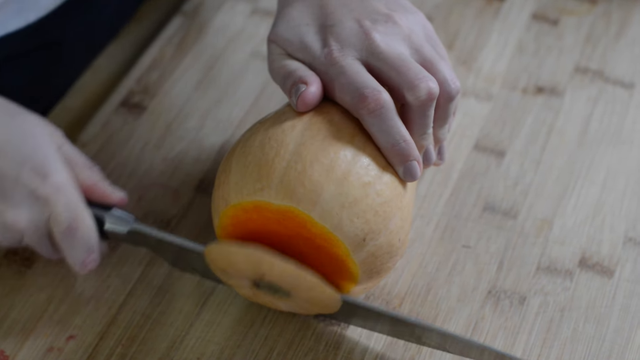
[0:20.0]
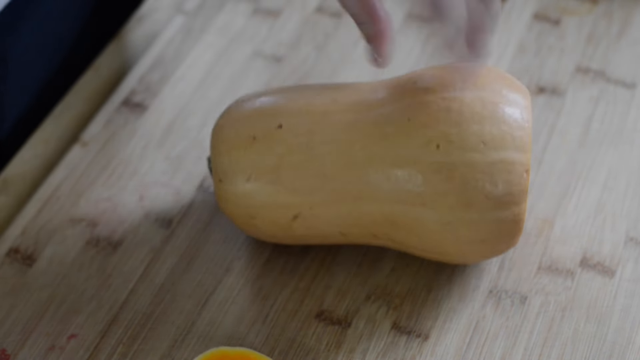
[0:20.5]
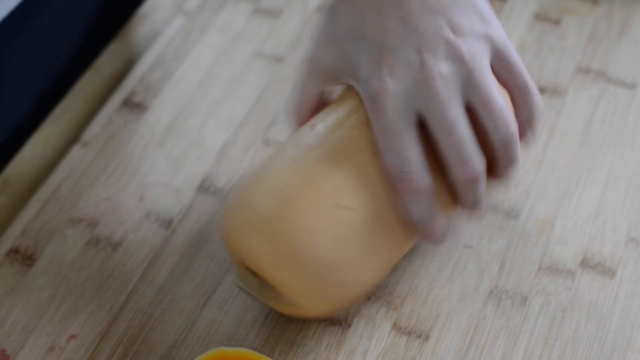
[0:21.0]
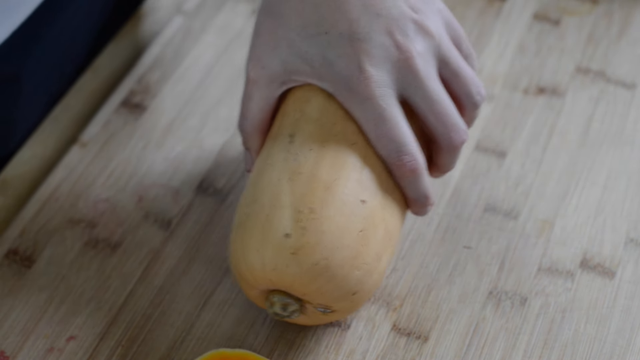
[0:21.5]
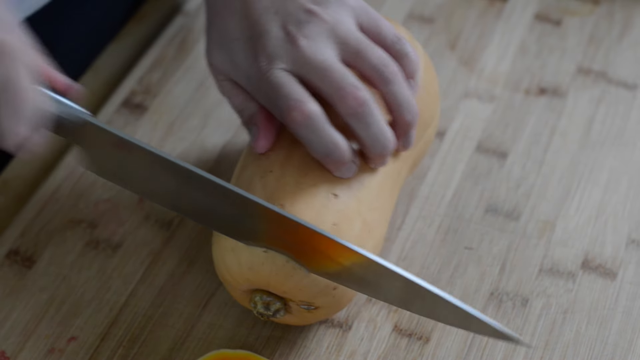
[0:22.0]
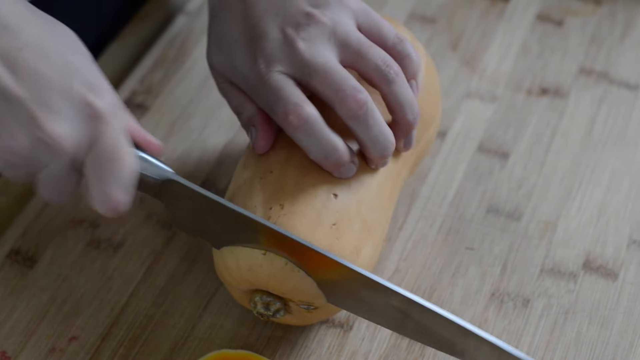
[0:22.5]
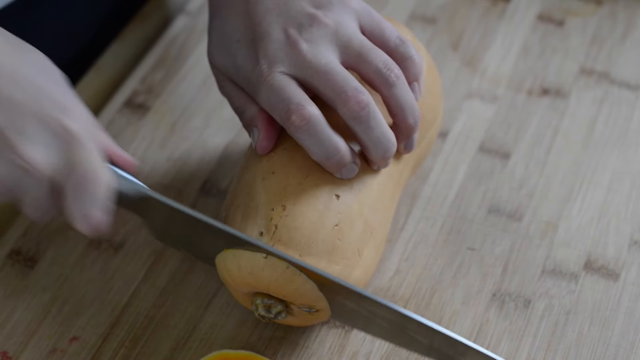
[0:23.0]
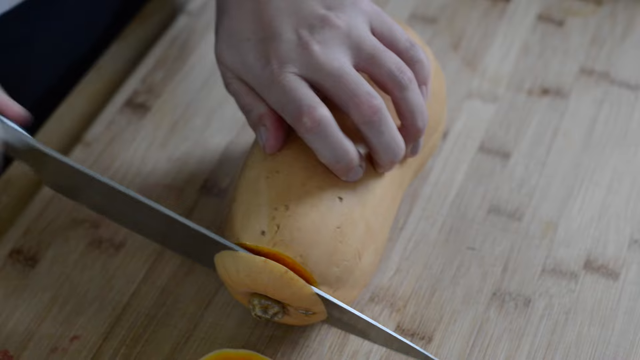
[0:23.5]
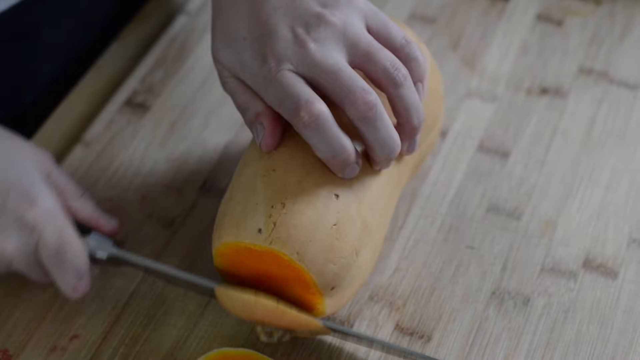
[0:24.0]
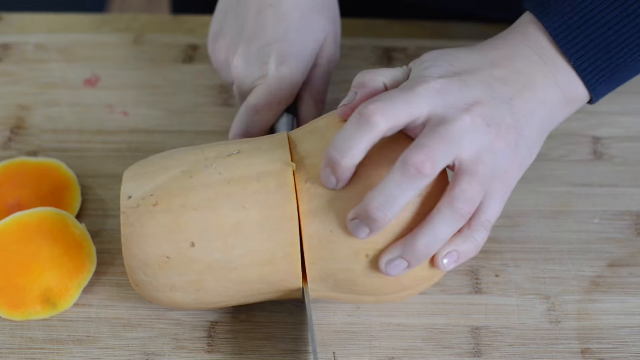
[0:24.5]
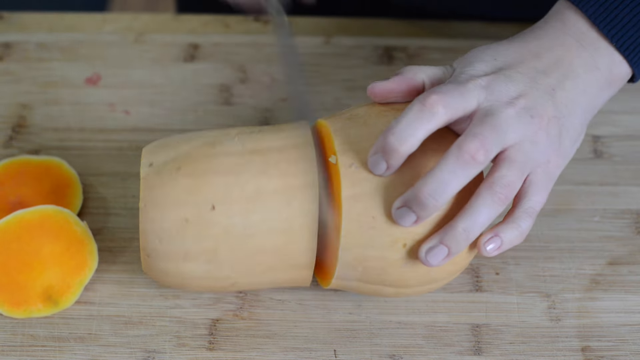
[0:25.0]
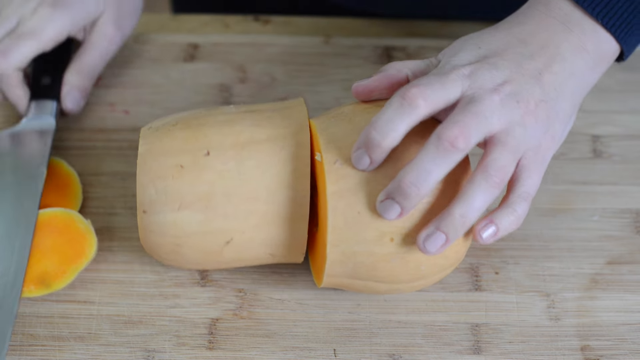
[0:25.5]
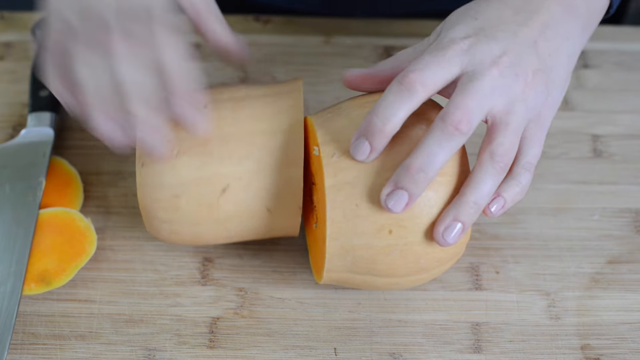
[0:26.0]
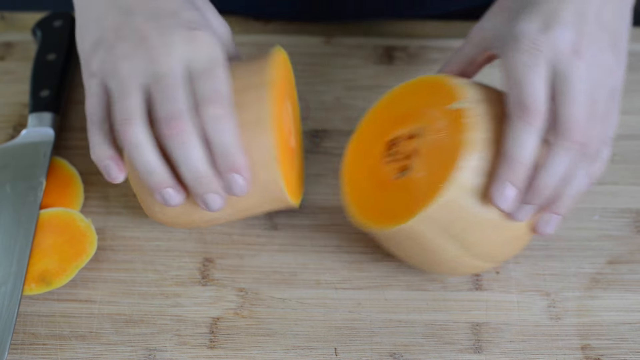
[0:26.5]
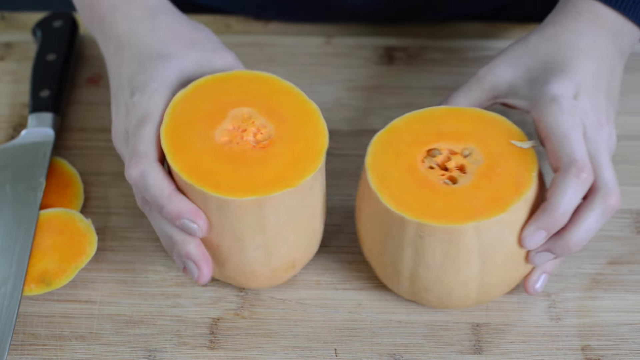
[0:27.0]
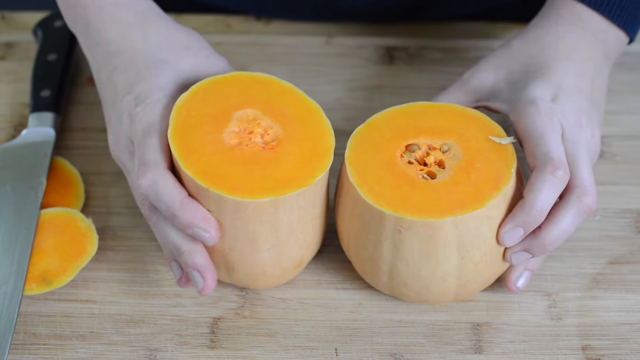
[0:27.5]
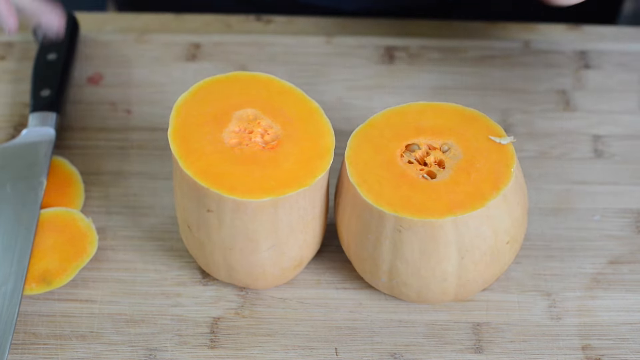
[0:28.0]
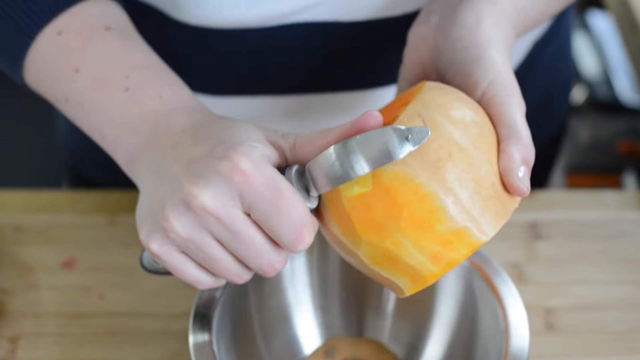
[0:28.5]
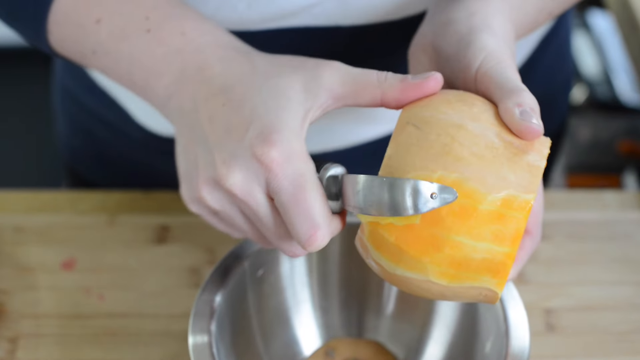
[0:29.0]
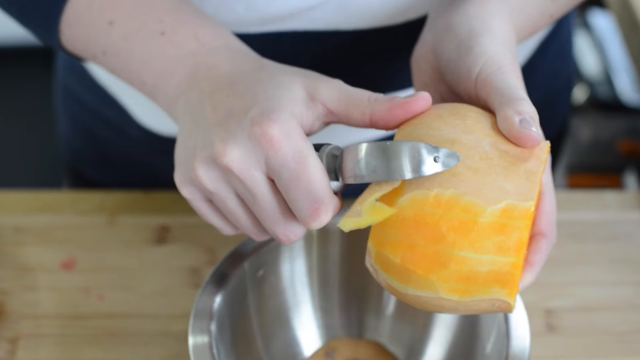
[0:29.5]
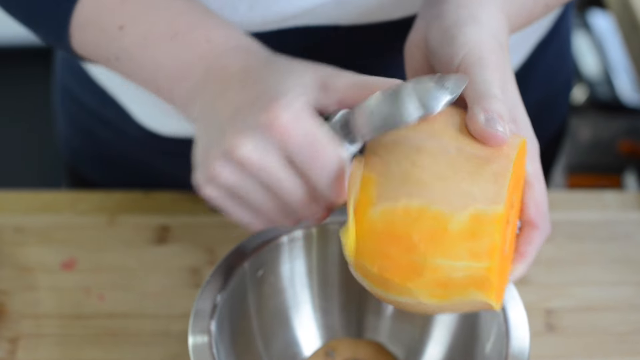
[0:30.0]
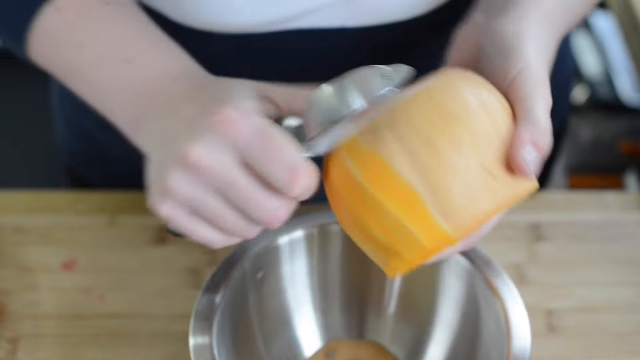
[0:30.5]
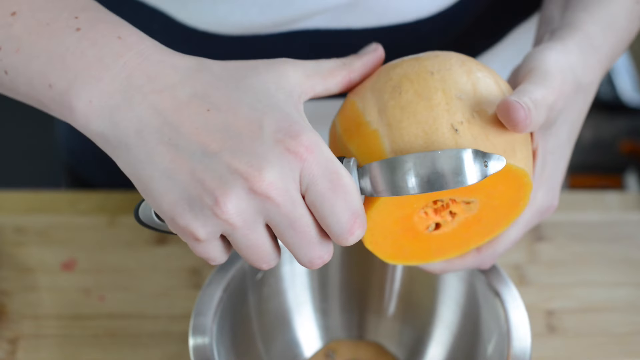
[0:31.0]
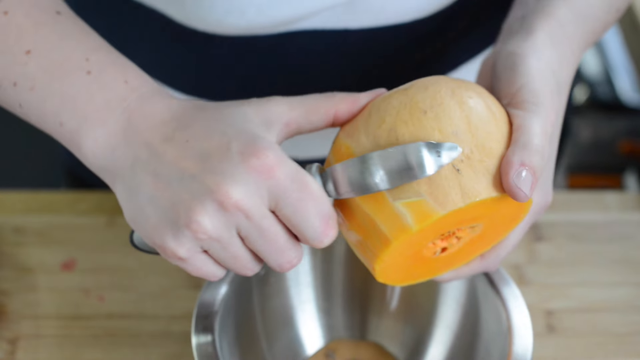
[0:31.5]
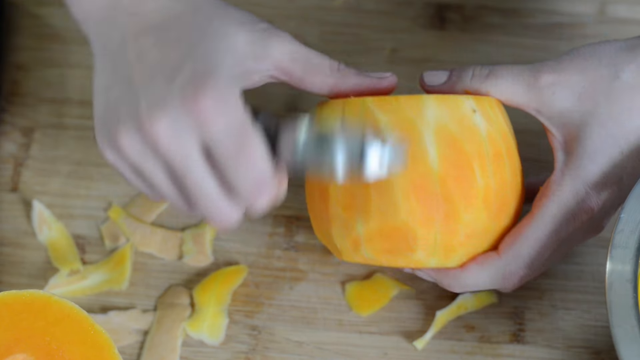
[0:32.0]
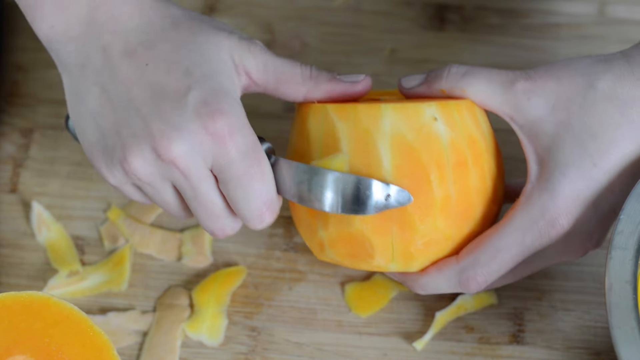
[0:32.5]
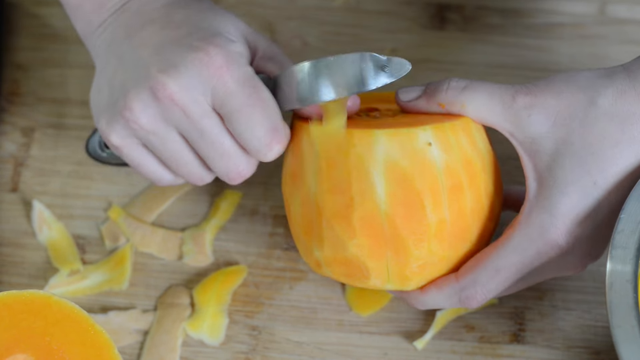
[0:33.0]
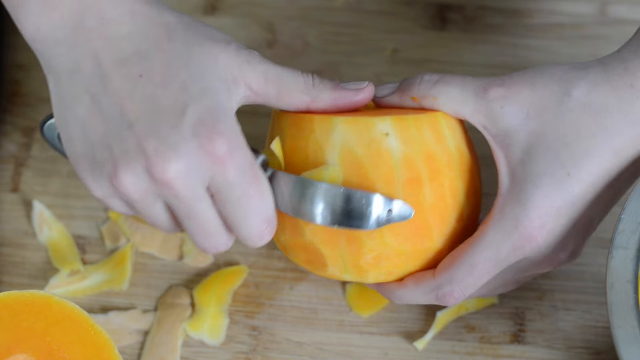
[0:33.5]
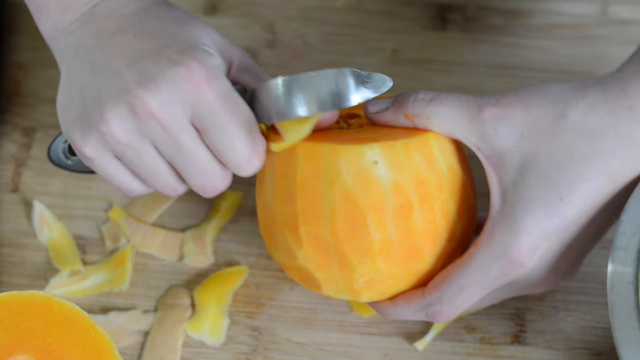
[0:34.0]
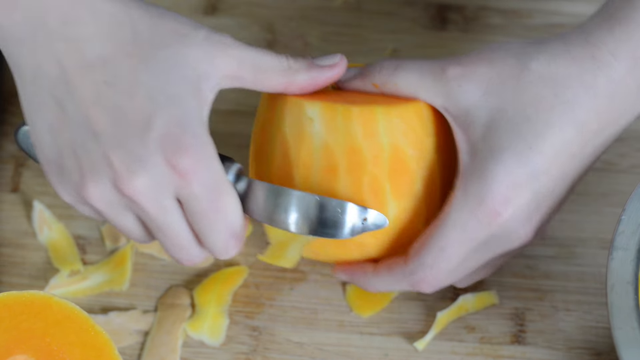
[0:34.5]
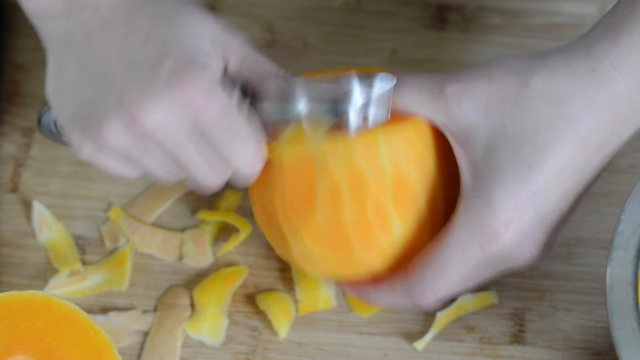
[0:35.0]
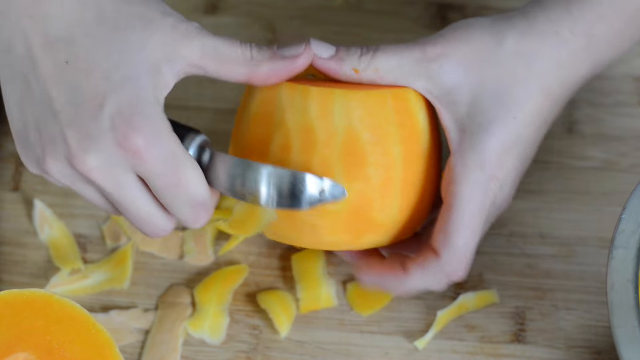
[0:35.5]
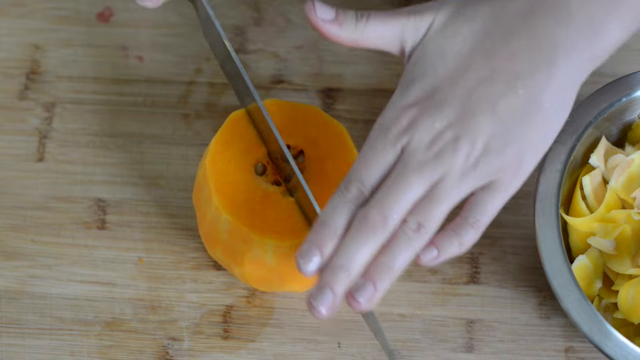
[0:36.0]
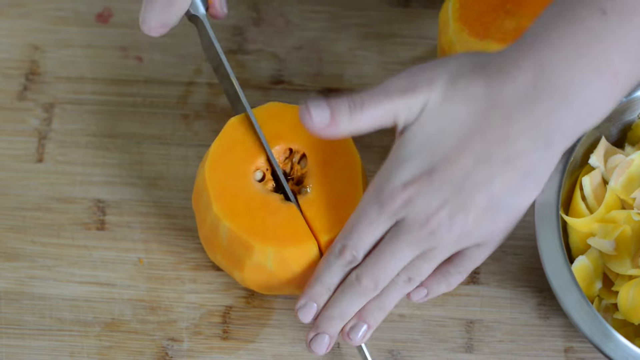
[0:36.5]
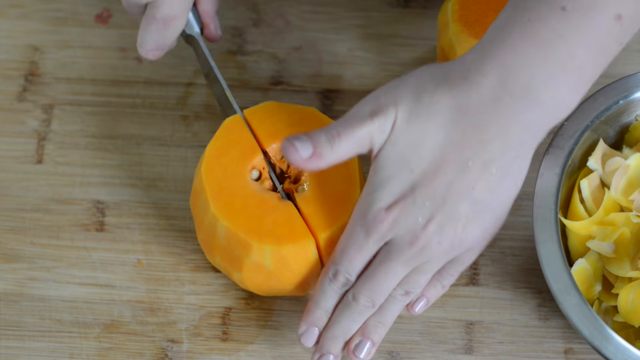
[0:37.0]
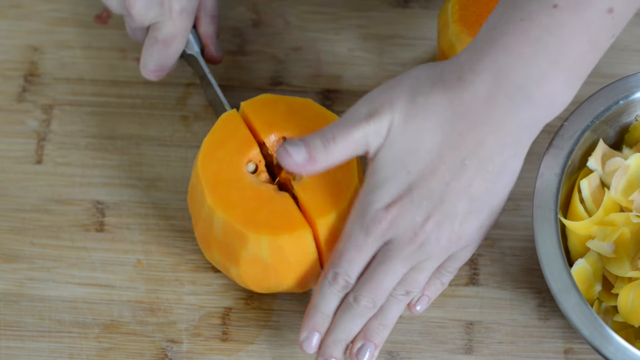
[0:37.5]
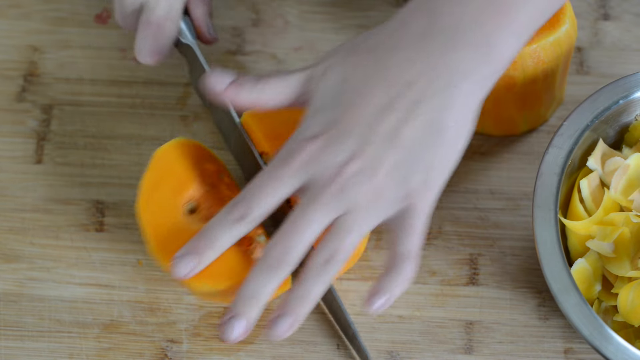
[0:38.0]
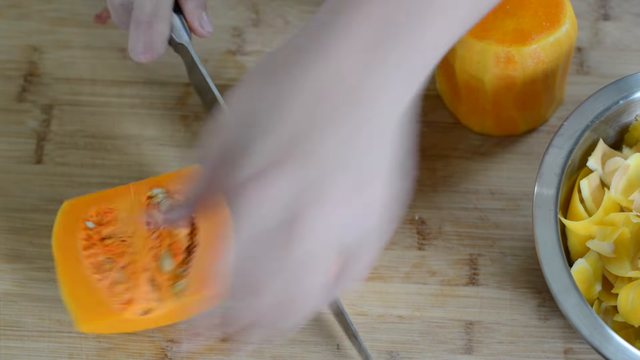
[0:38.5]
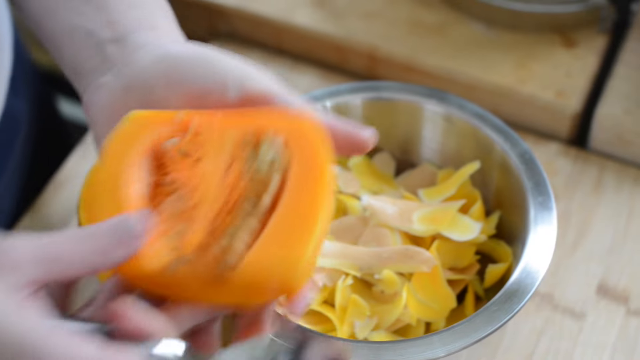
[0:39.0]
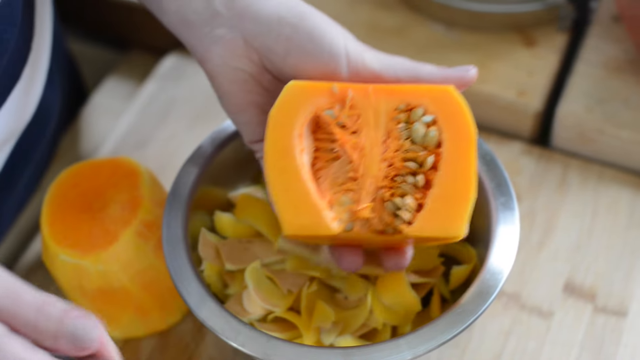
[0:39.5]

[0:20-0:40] A squash is rotated on a cutting board while a person cuts it in half with a very large knife. They then peel the squash, apparently with a vegetable peeler, into a silver bowl, and then peel it over the cutting board. They cut it in half again and get ready to scrape the seeds out into a silver bowl, using a silver spoon to scoop out the seeds. The squash is spun around, cut and peeled from various angles over and over in fast, quick cuts. In one shot the person wears what looks like a navy and white shirt, and in another they hold a piece of the squash in one hand while cutting it with the other. It looks like just one squash, and a quite large one, is being cut, and the cuts look very even. The footage has an amateur look but good, clear image quality.